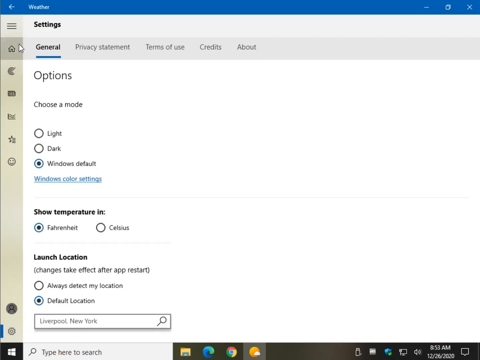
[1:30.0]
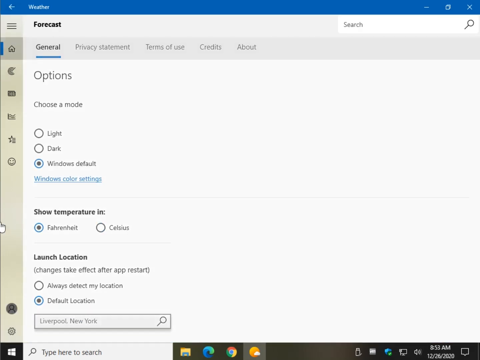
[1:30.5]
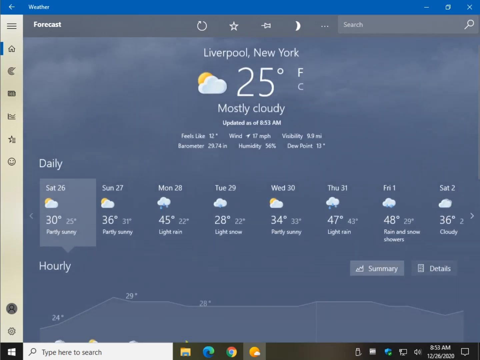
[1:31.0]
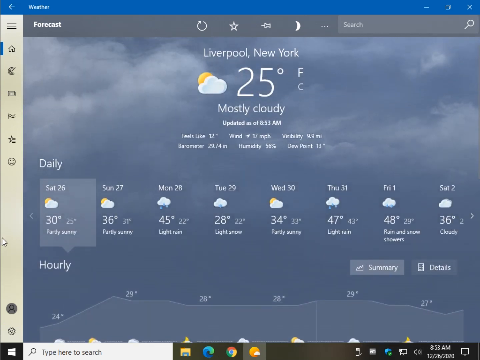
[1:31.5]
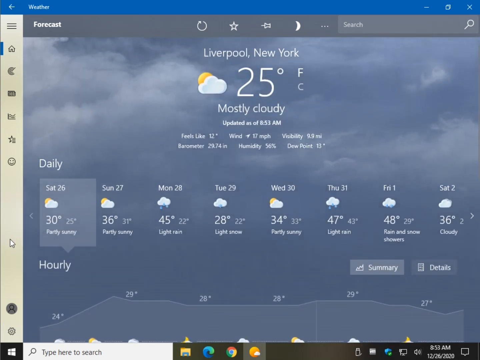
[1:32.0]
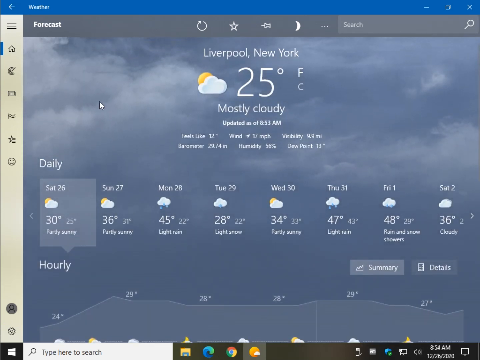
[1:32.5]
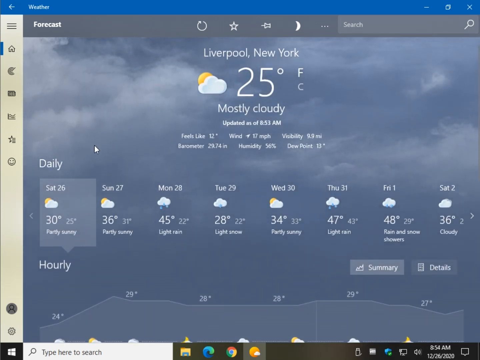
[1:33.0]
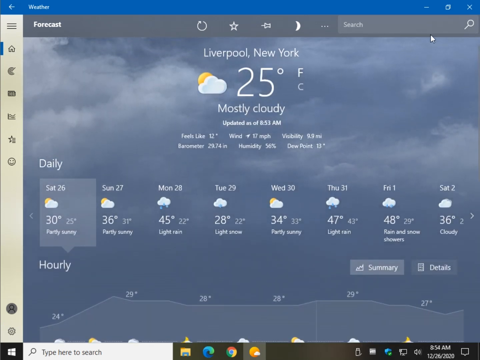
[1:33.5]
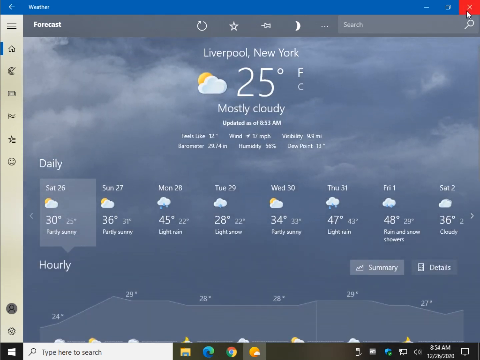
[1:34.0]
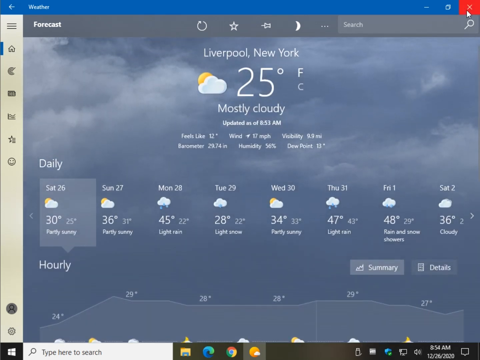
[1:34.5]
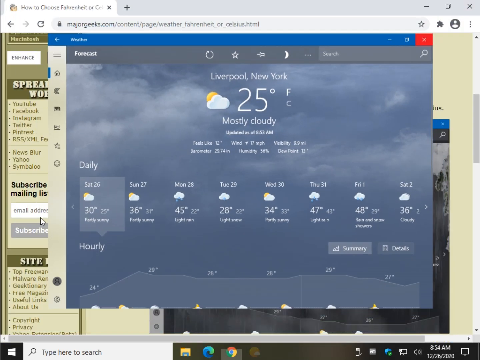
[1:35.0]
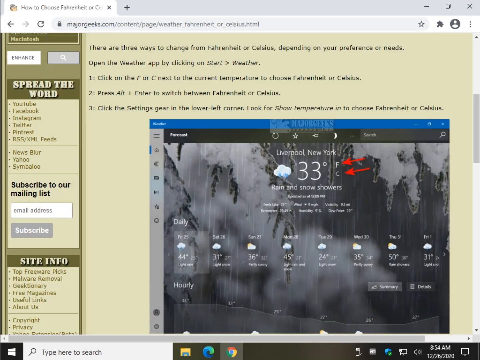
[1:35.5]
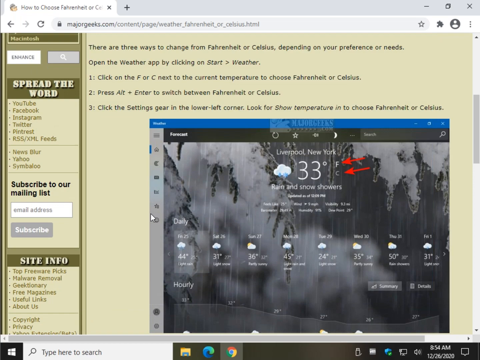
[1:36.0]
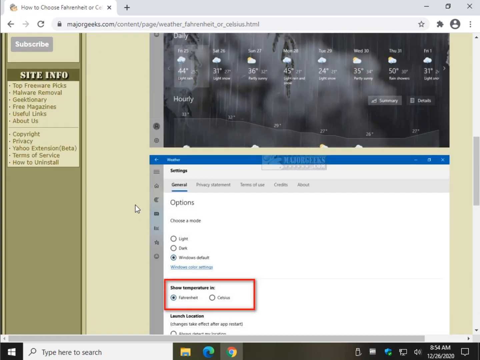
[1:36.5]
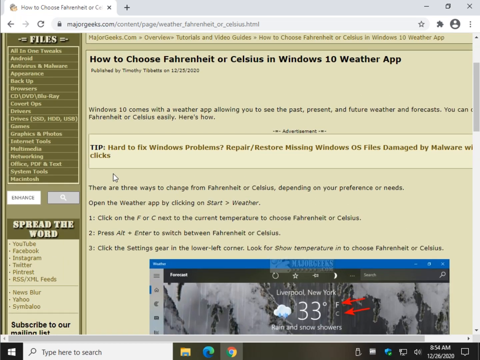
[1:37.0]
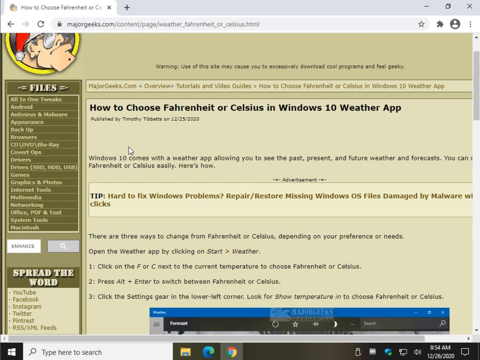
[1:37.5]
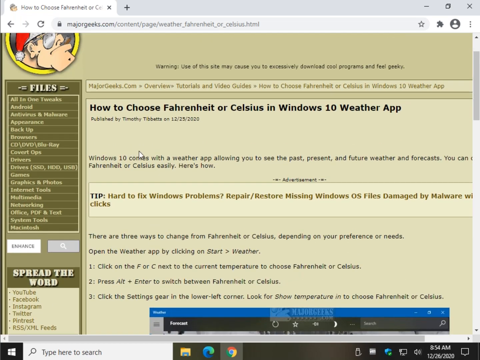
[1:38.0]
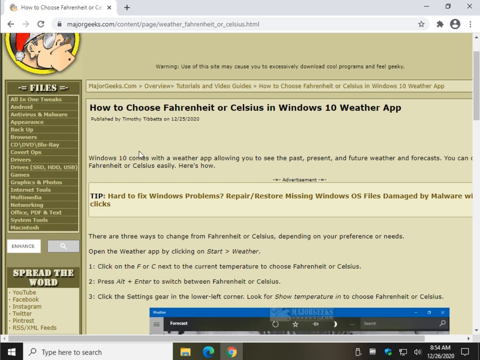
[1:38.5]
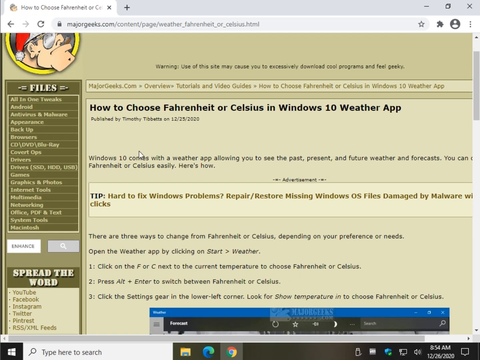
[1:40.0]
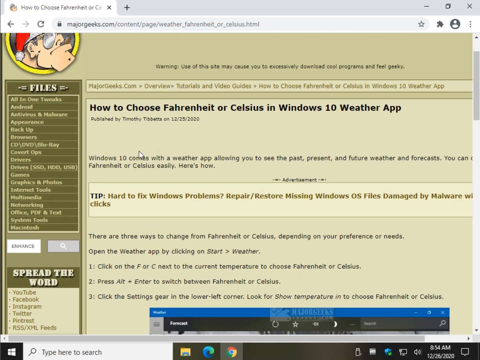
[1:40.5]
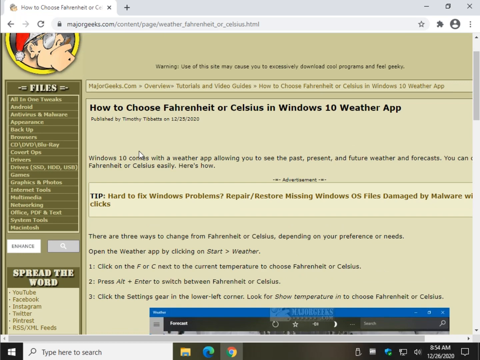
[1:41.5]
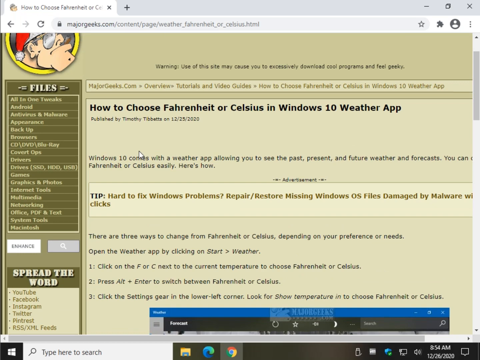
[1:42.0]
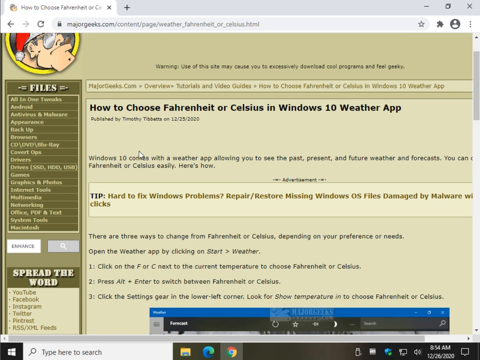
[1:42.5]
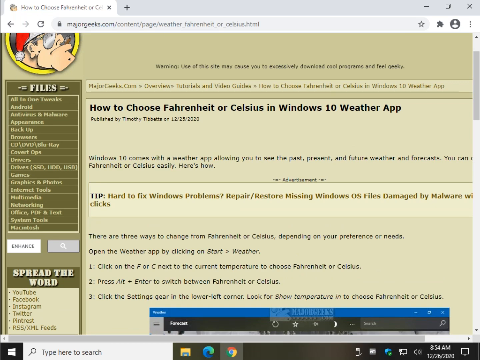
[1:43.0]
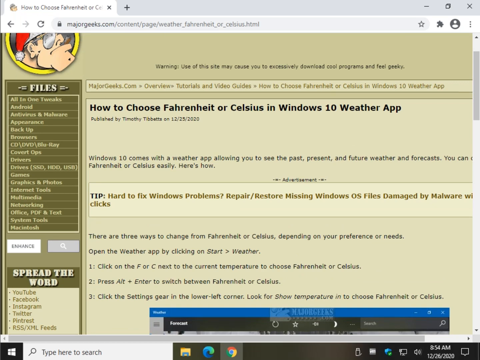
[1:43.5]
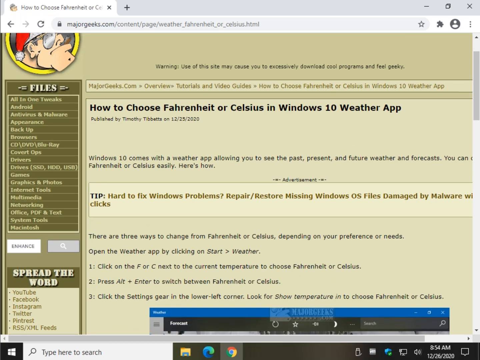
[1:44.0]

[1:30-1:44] The settings menu of the weather app is open on the General tab, showing options: choose a mode, with light, dark and window default, and window default selected. Below that is show temperature in, with Fahrenheit or Celsius, and Fahrenheit selected, followed by launch location reading default location. The scene then changes instantly to the Liverpool, New York page at 25 degrees Fahrenheit, mostly cloudy, with a high of 30 and a low of 25 that day. The user then switches back to the Major Geeks site, to the page on how to change Fahrenheit or Celsius in Windows 10, and shows the list of instructions on the page.